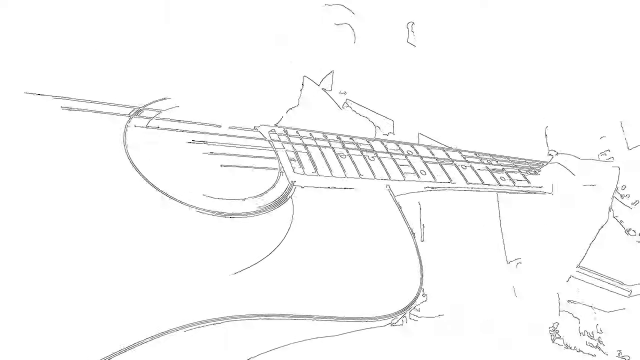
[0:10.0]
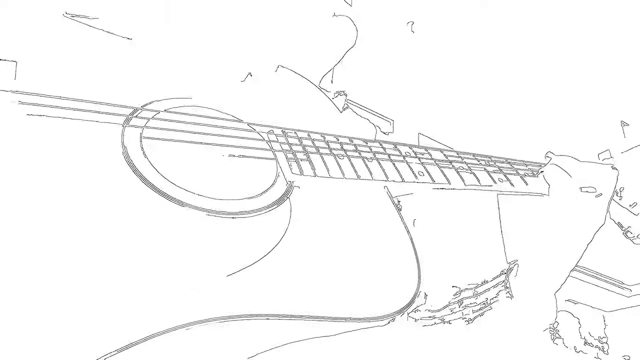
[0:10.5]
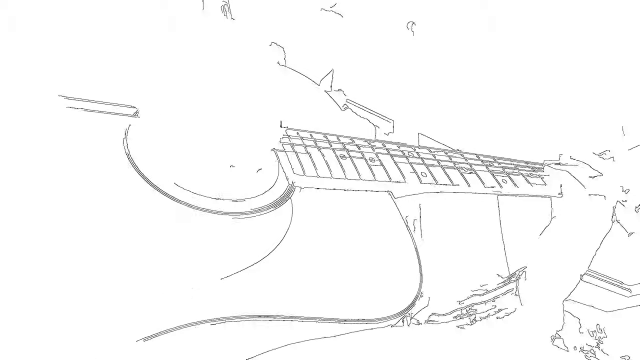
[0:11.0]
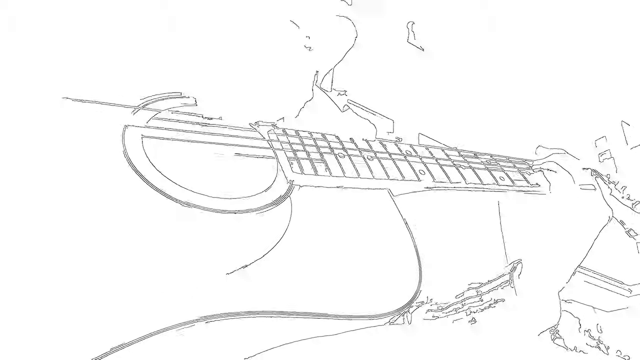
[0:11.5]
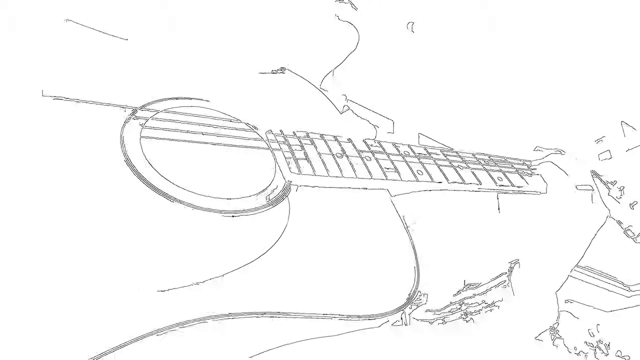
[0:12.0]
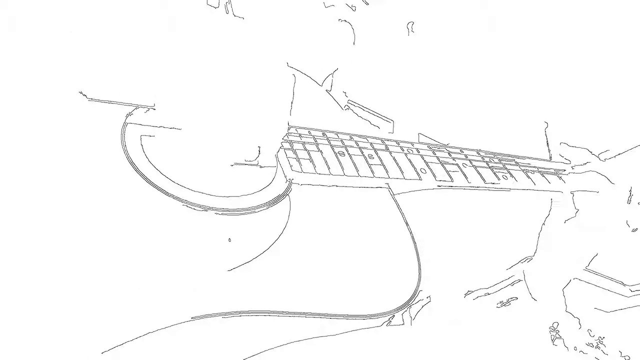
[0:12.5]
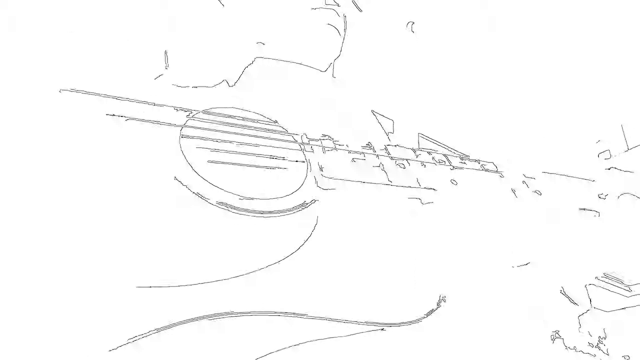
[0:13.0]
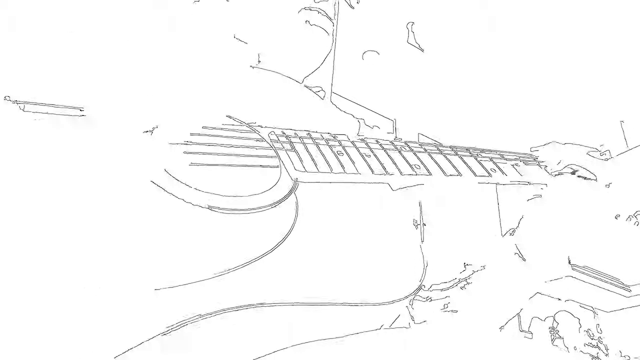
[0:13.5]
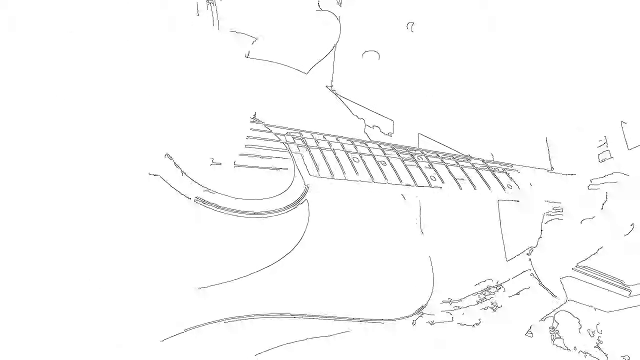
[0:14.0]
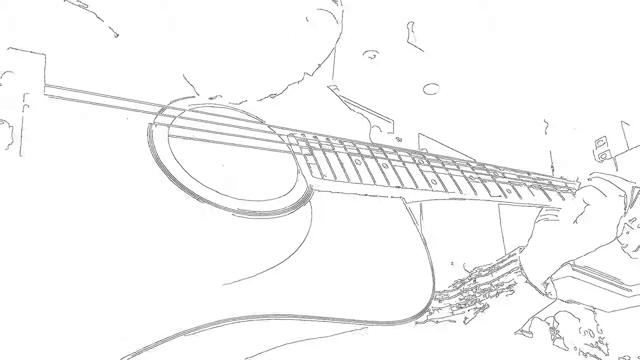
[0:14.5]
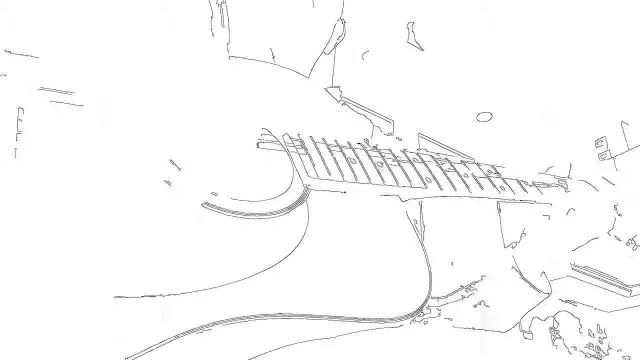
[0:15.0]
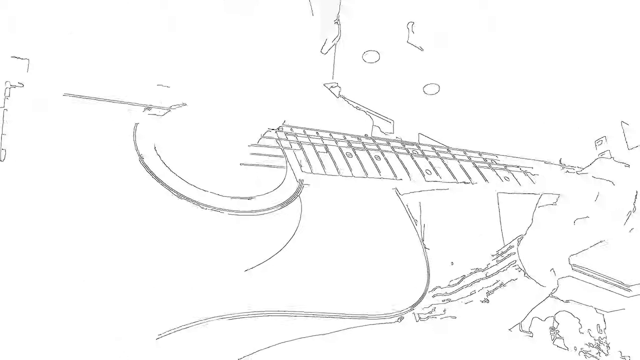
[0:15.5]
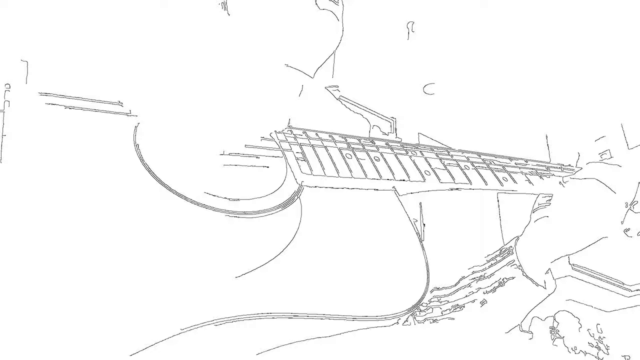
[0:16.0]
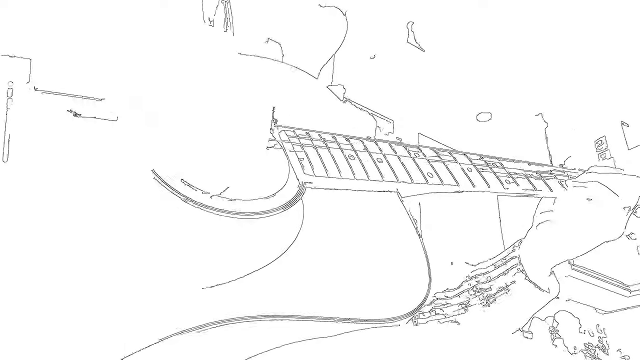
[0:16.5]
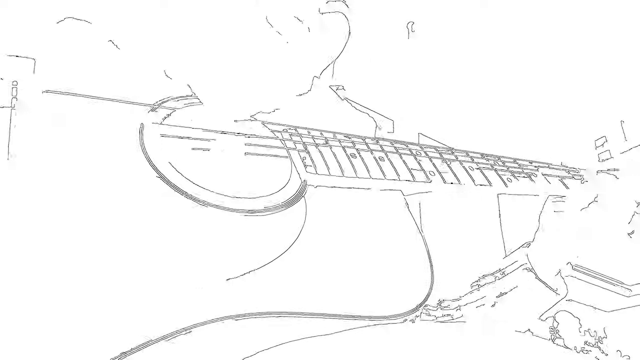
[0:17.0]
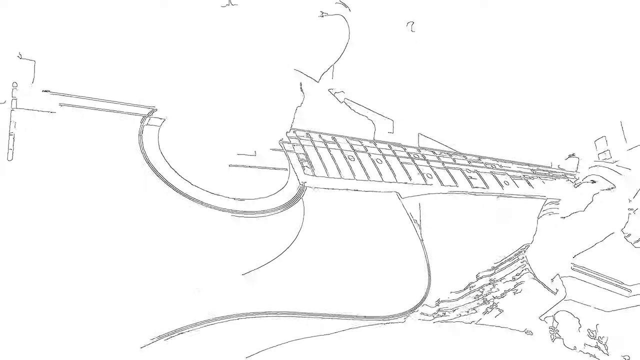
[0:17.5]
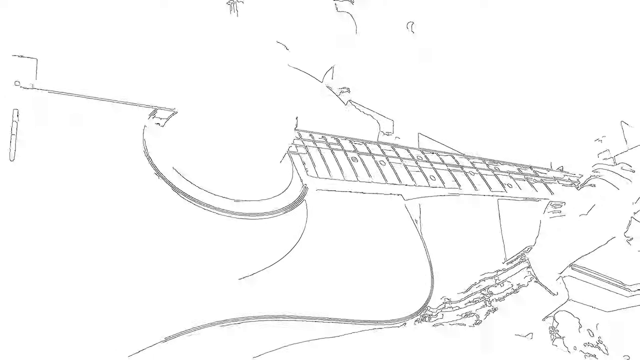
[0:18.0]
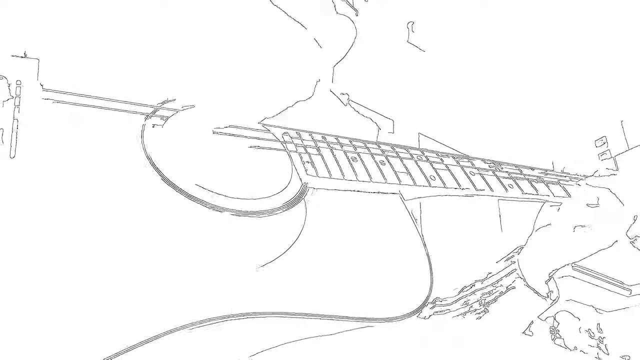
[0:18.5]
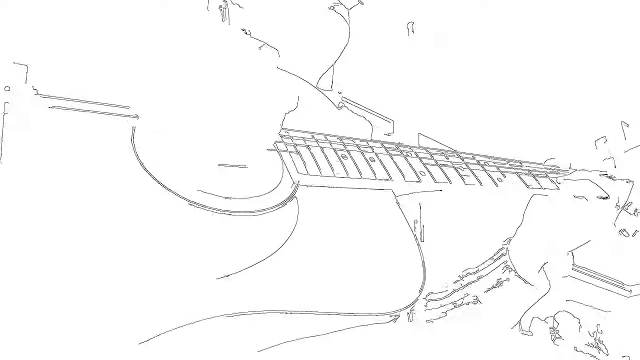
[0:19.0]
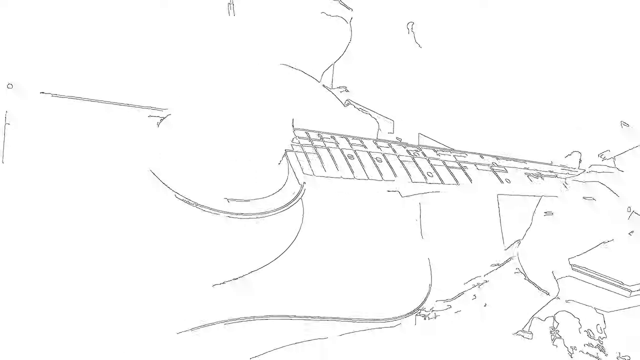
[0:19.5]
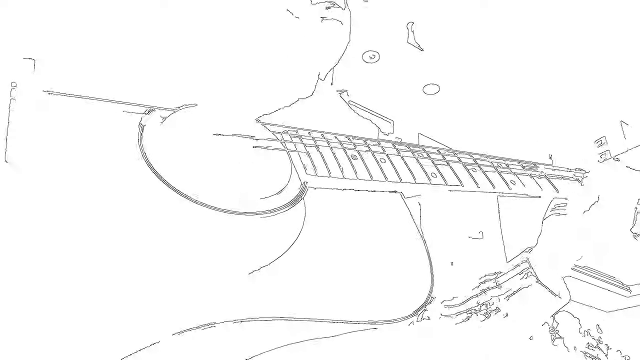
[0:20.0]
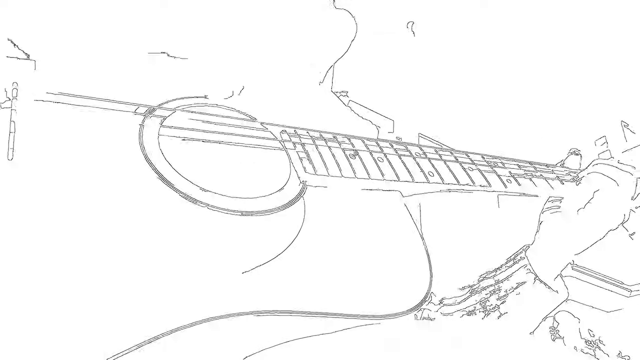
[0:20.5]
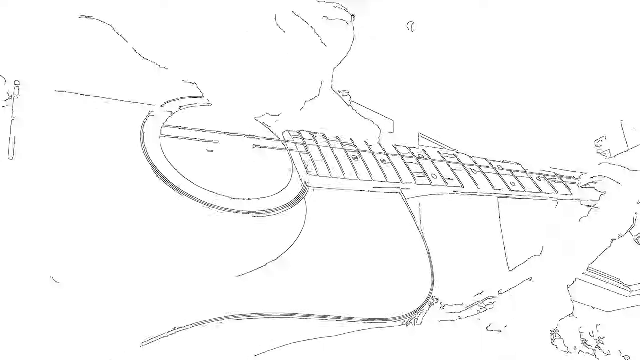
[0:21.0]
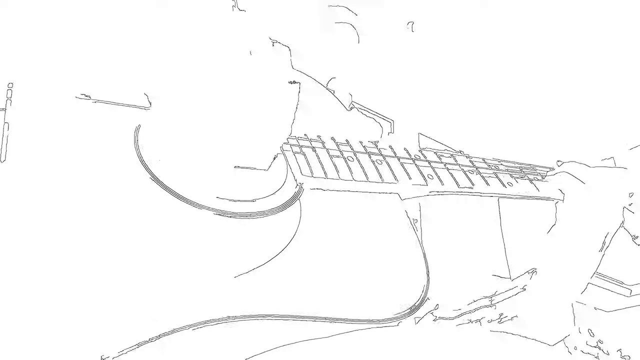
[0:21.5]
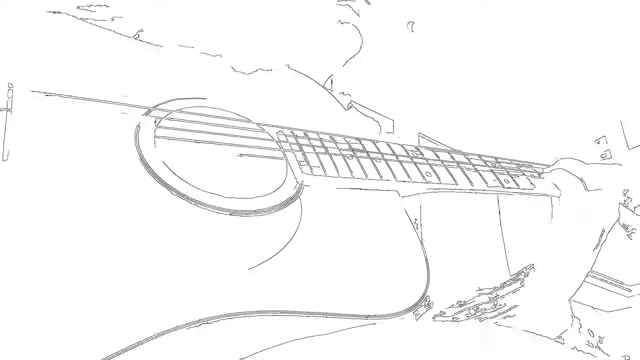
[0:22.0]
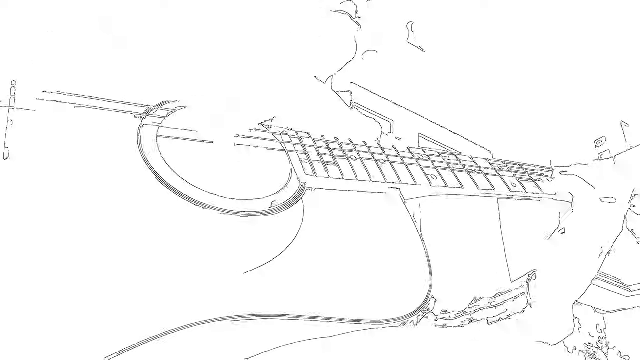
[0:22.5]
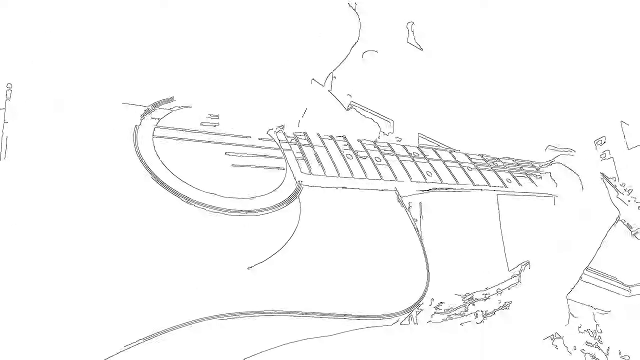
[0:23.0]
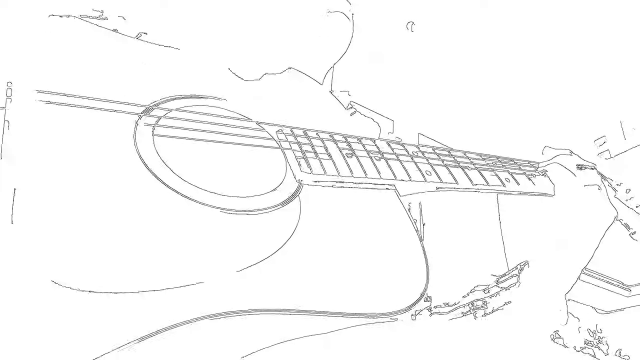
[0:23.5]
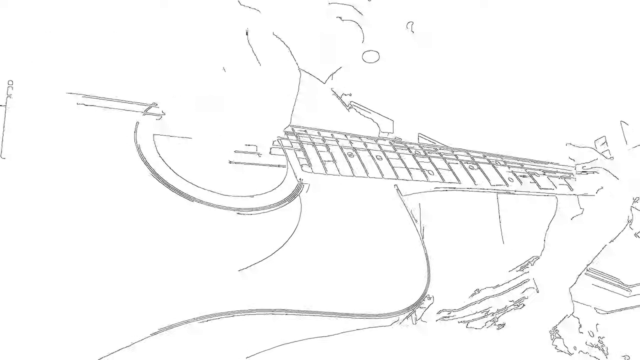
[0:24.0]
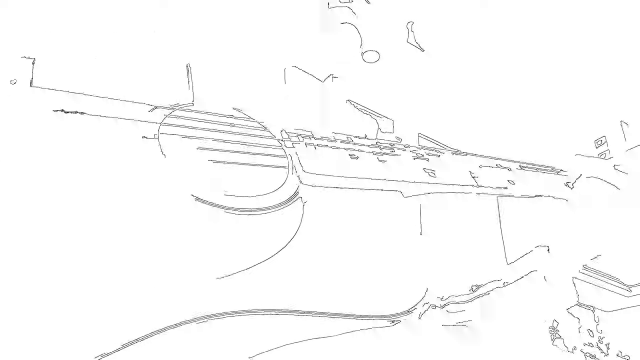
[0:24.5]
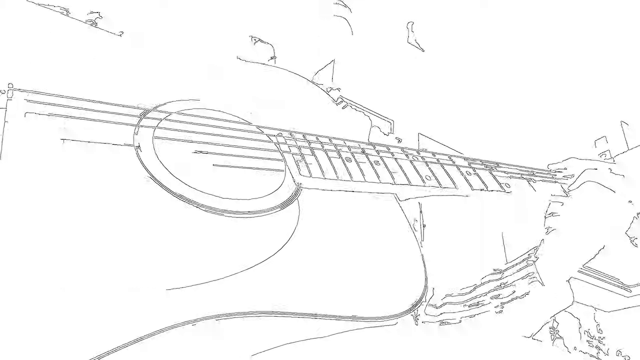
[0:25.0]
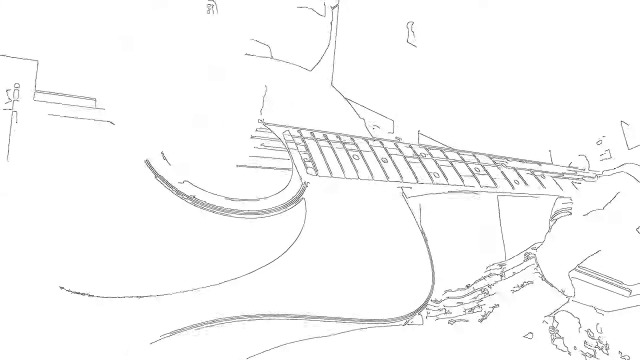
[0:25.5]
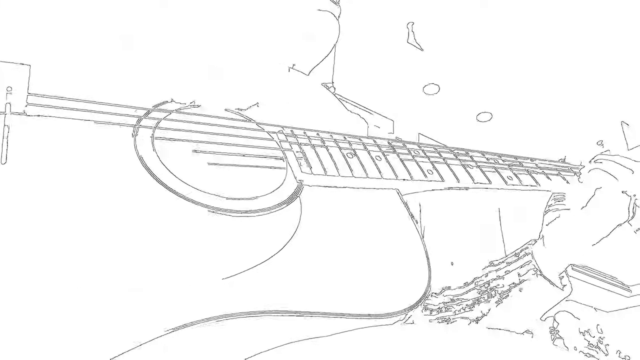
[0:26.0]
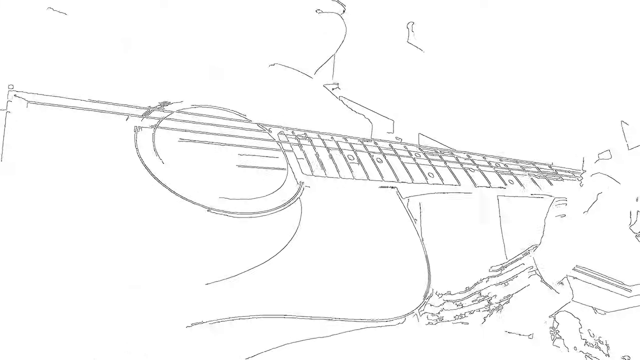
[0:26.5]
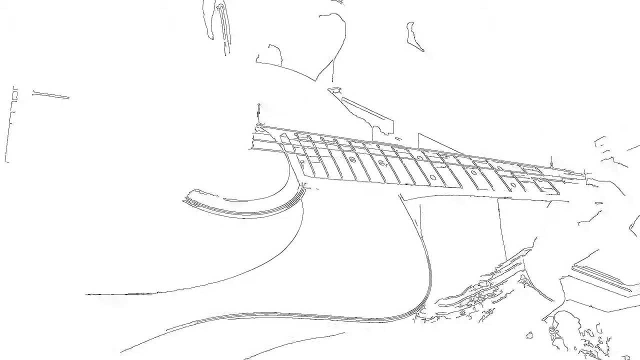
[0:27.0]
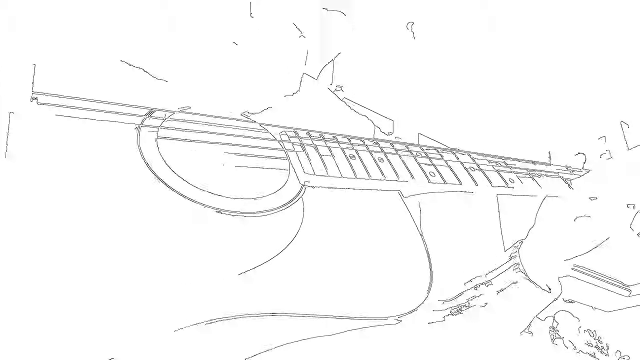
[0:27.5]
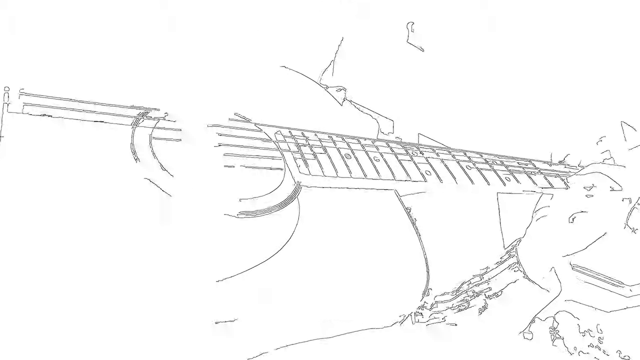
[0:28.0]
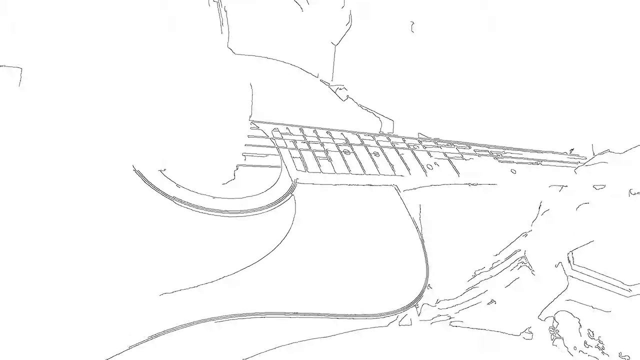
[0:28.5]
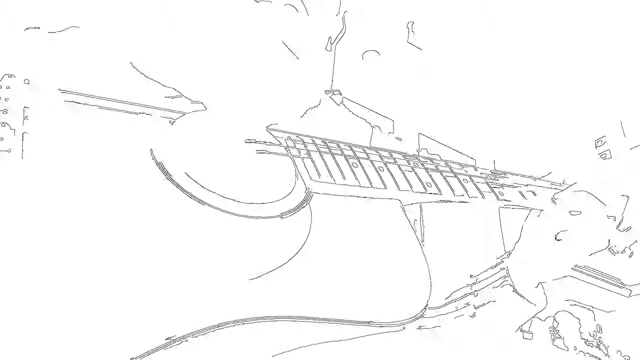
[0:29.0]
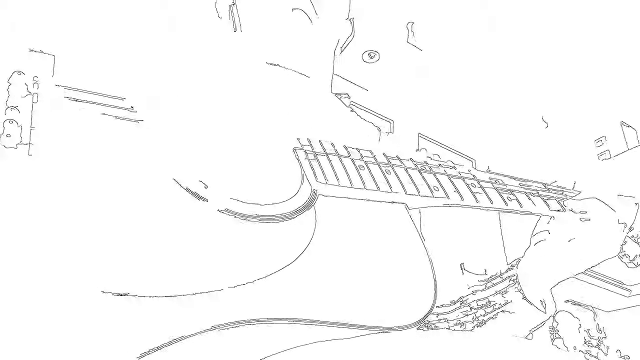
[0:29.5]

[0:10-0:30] The man begins to play the guitar he holds in his lap. The camera looks into the guitar itself, so both of his hands are visible playing, and his mouth moves as though he is singing, either straight across to a microphone above the camera's eyeline or acoustically. He looks off to each side as though looking around the room. The background is illustrated in black and white by the filter, but lights over the kitchen sink in a modular arrangement, cabinets behind him, possibly the exhaust for a stove, and a series of shelf spaces over the cabinets holding a box with what looks like a kitchen appliance are visible, along with some other decorative items on the space over the sink. He continues to sing throughout, his fingers moving as he plays. On his left hand he wears a simple wedding band. His sweater is ribbed with a collar and may be a zip-up cardigan, and underneath he has on a collared shirt that looks like a button-up. At certain points his face dips into frame, showing that he wears eyeglasses.